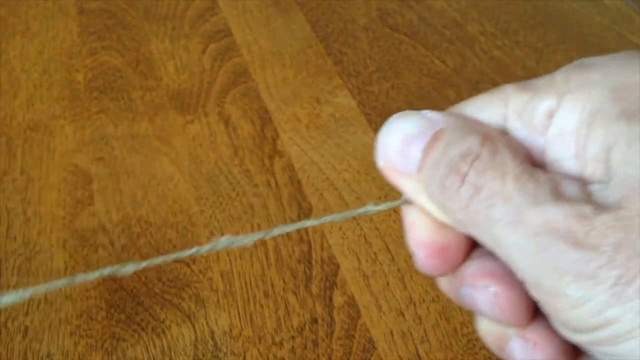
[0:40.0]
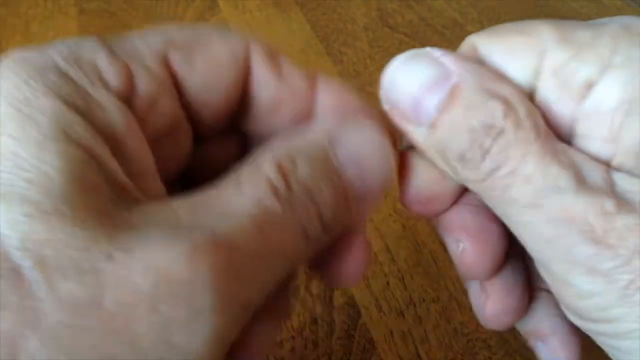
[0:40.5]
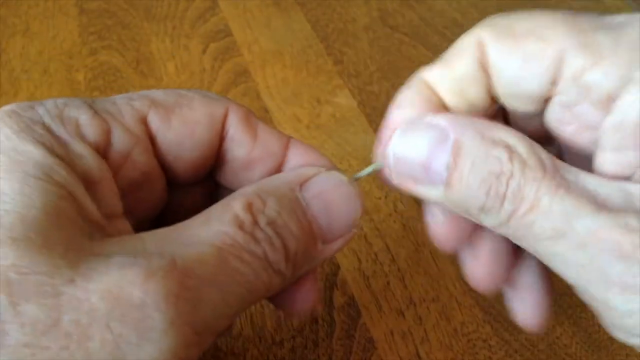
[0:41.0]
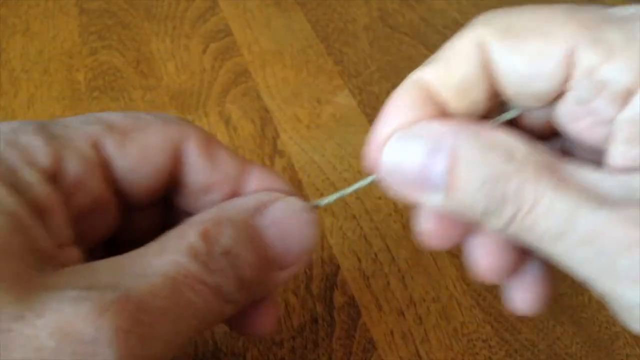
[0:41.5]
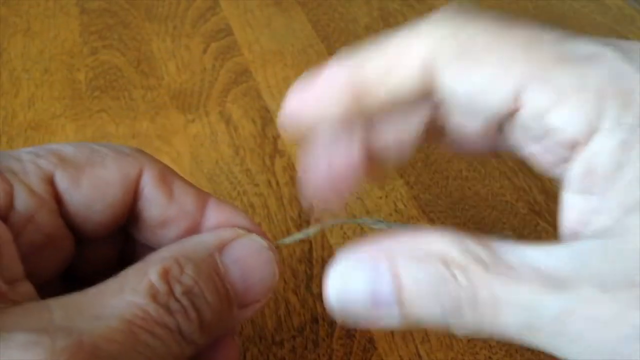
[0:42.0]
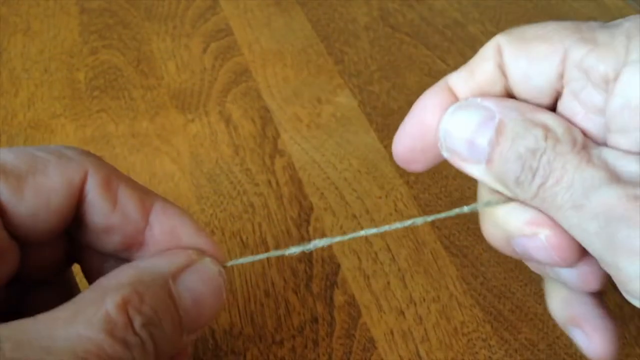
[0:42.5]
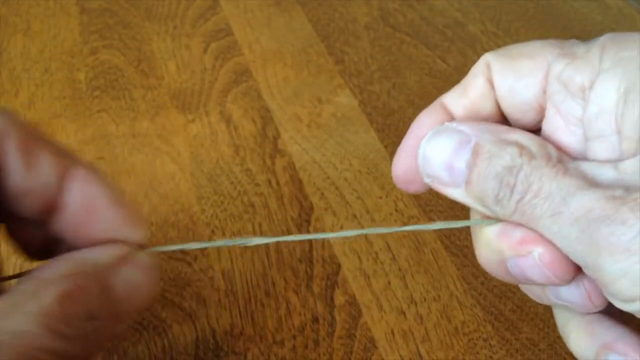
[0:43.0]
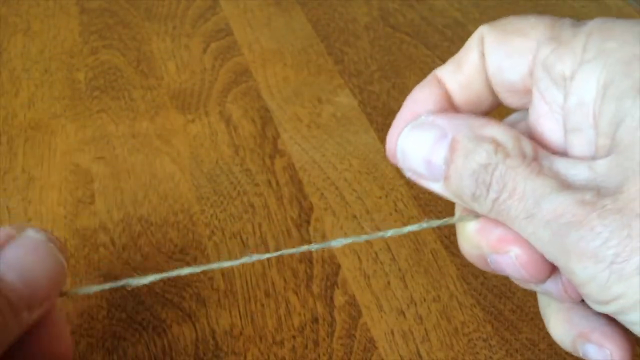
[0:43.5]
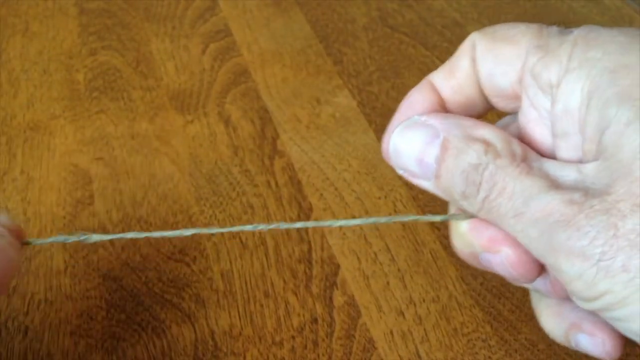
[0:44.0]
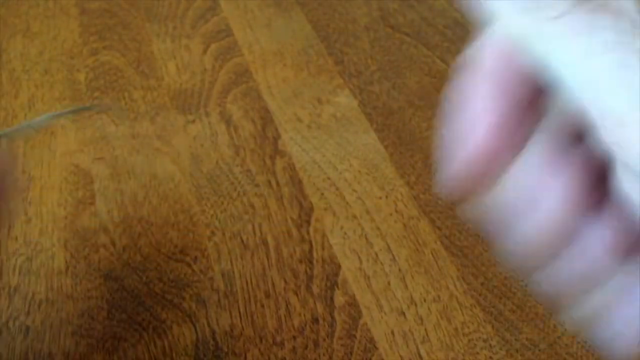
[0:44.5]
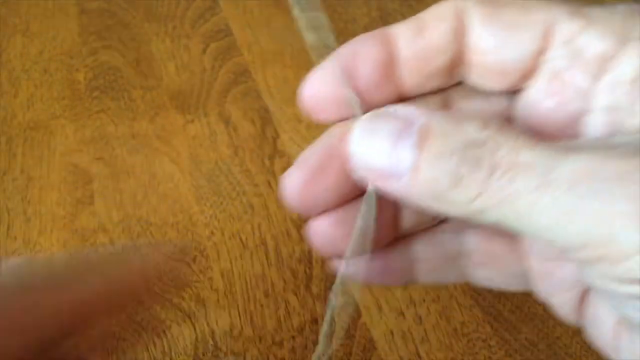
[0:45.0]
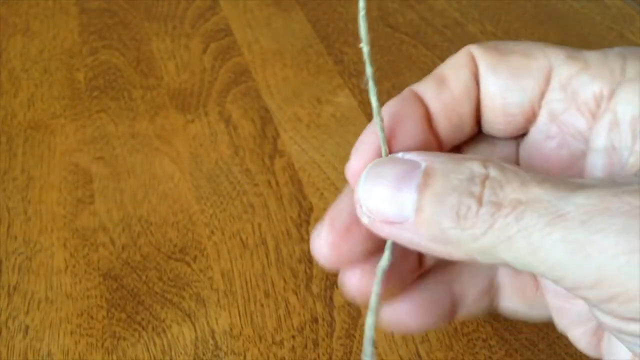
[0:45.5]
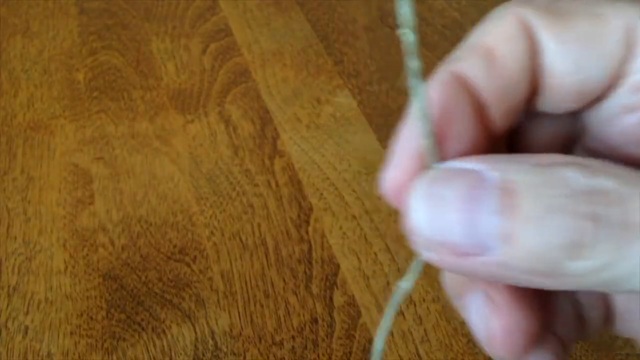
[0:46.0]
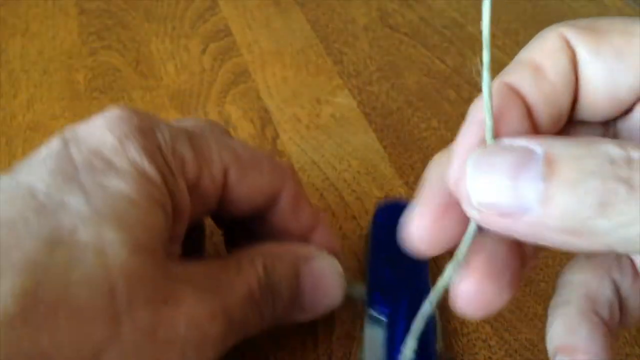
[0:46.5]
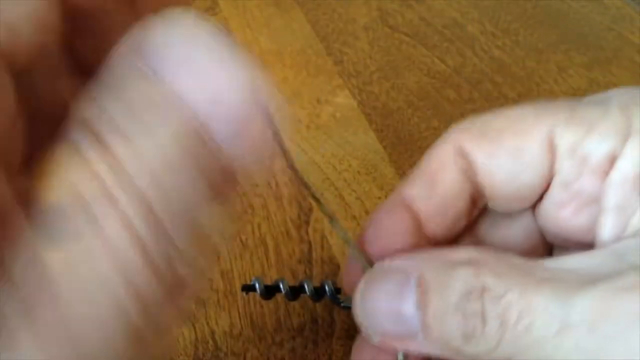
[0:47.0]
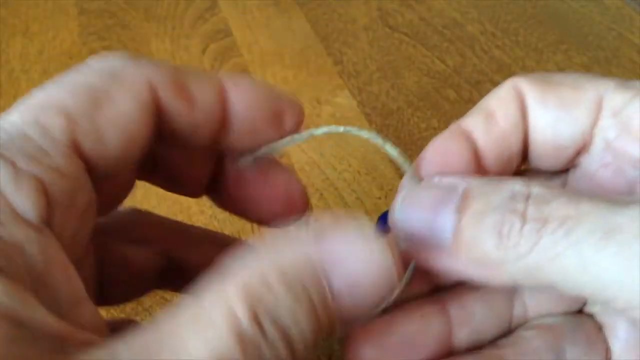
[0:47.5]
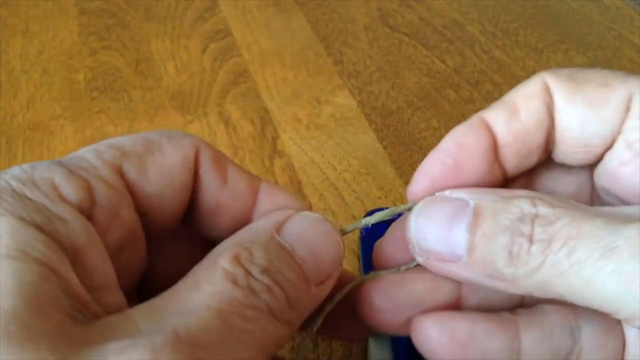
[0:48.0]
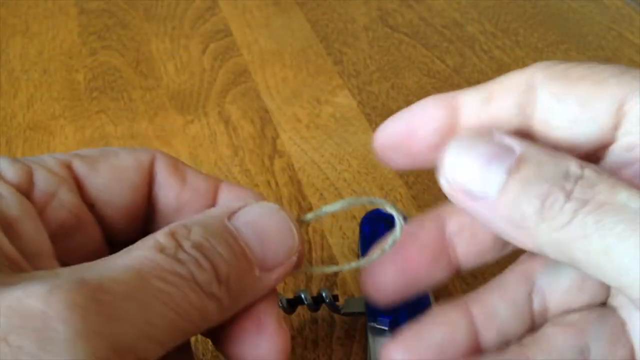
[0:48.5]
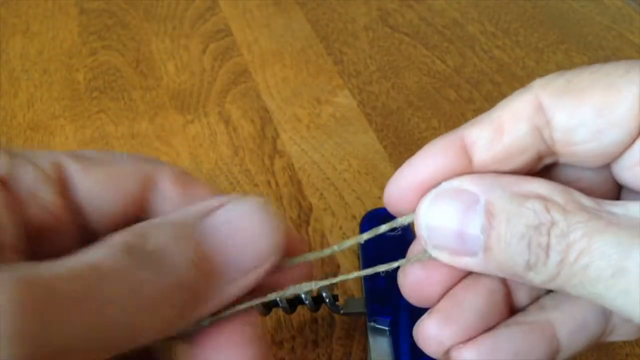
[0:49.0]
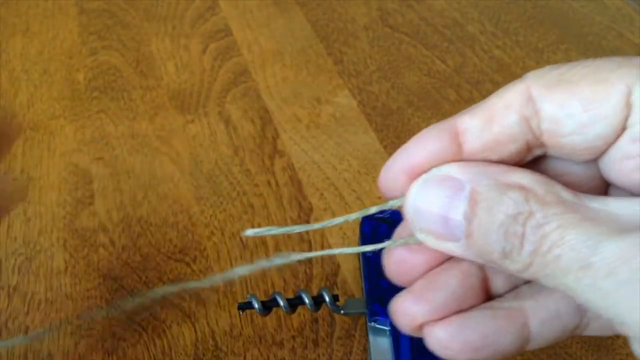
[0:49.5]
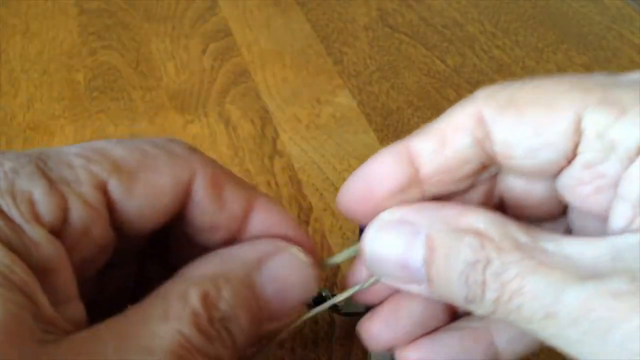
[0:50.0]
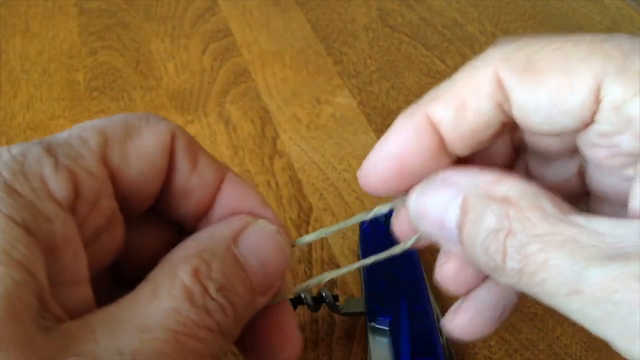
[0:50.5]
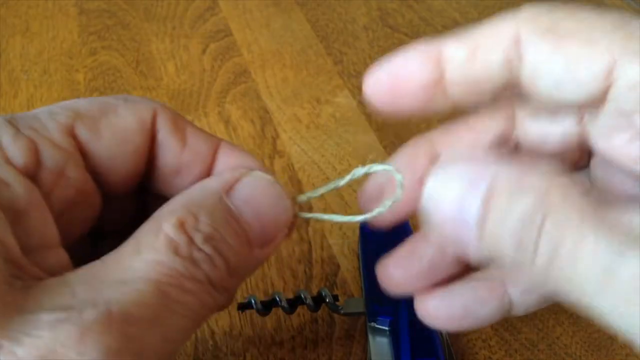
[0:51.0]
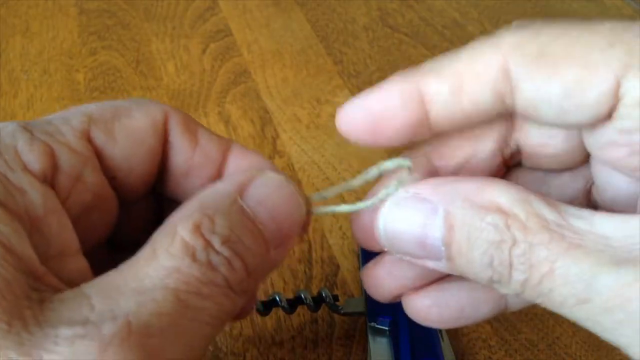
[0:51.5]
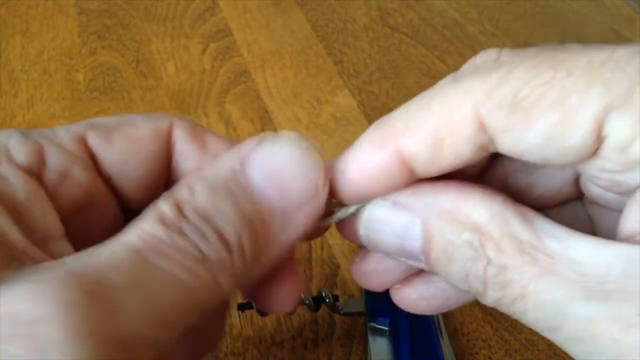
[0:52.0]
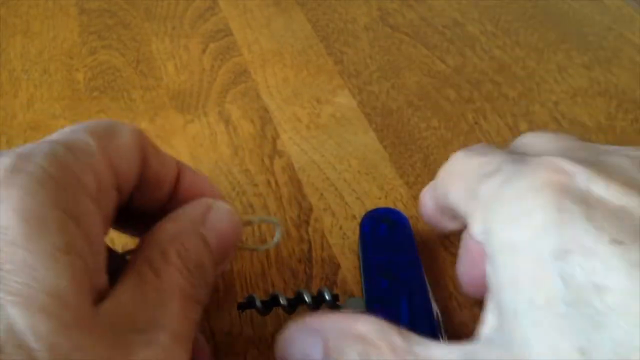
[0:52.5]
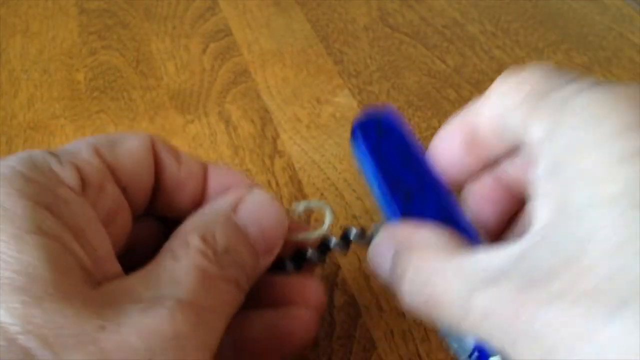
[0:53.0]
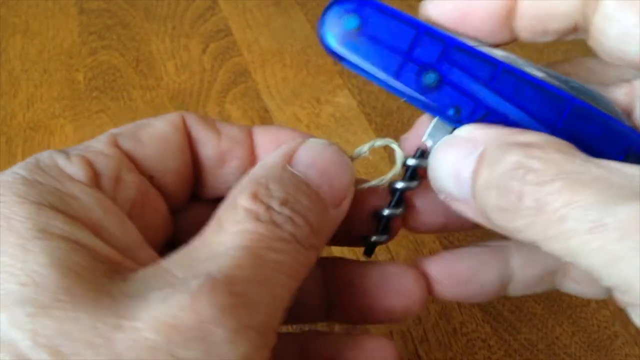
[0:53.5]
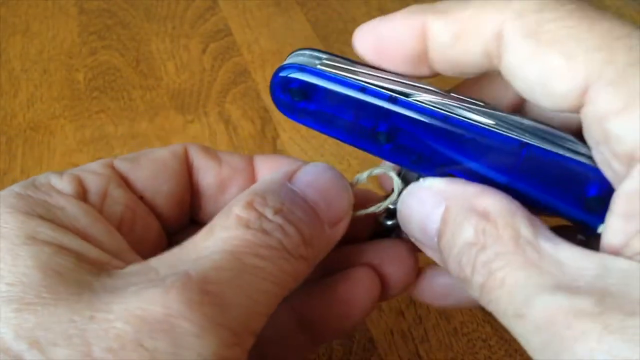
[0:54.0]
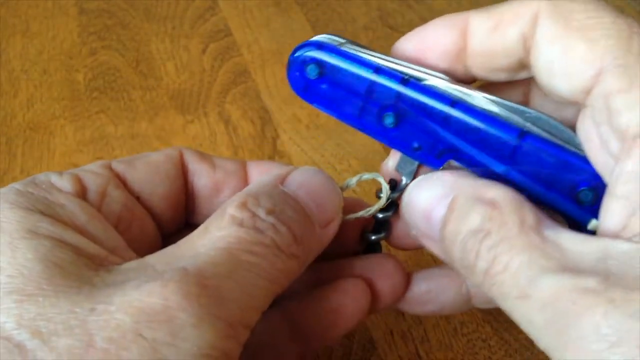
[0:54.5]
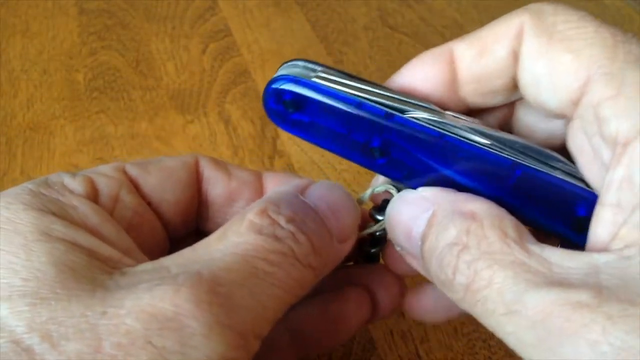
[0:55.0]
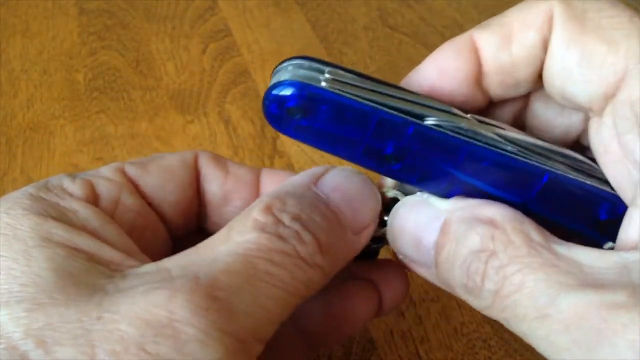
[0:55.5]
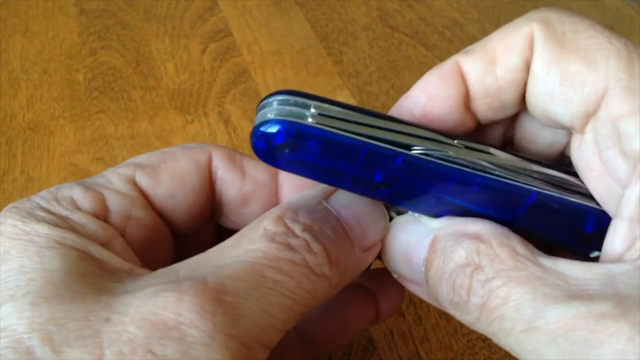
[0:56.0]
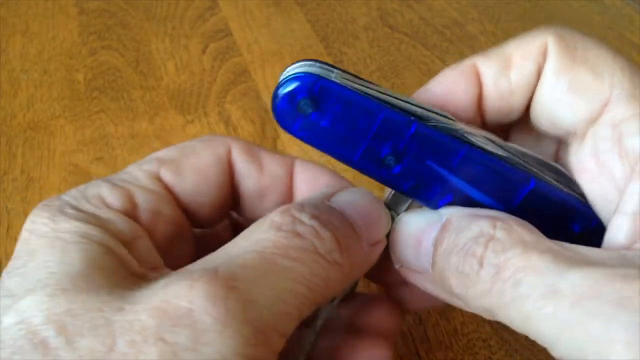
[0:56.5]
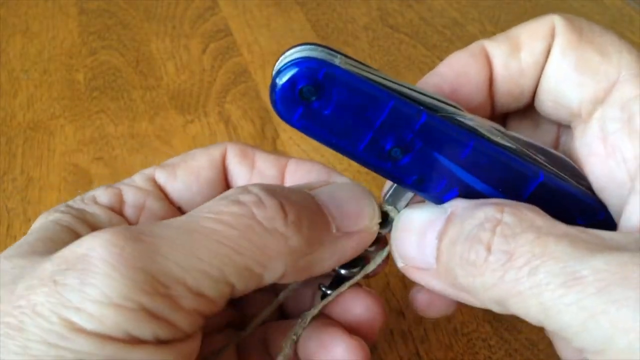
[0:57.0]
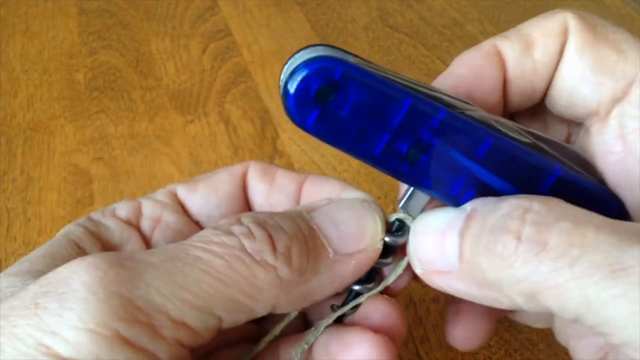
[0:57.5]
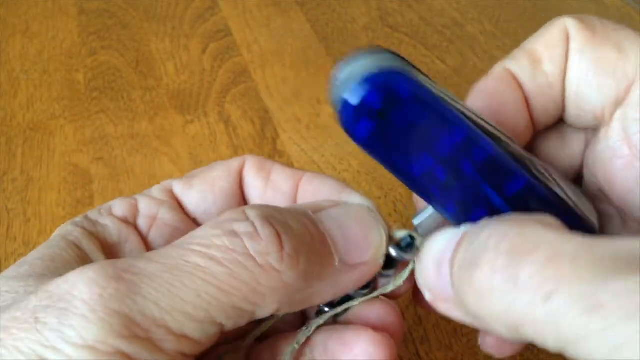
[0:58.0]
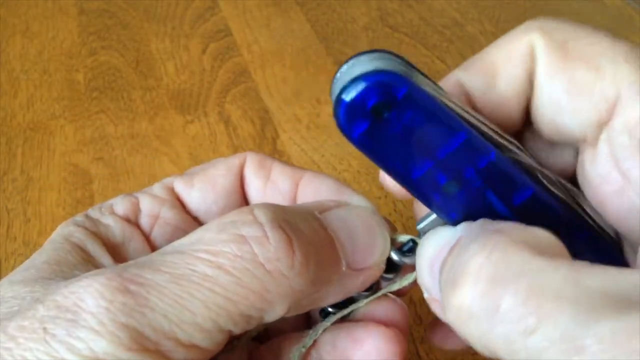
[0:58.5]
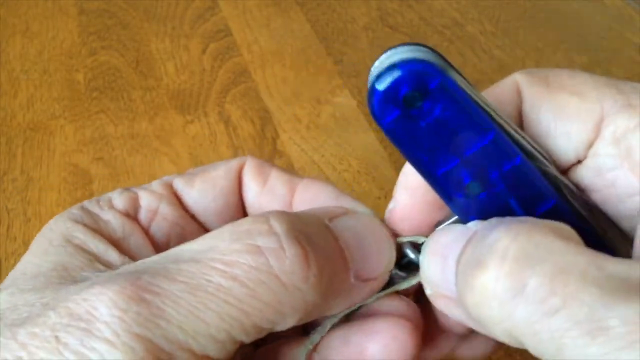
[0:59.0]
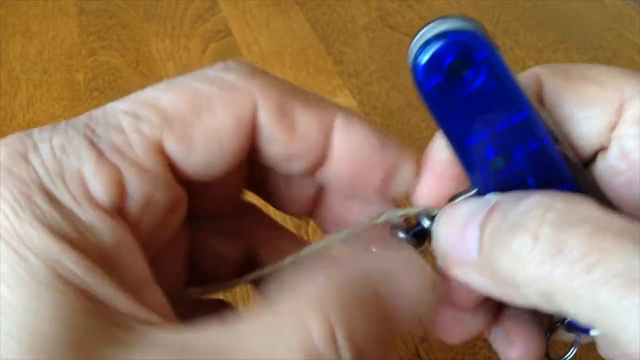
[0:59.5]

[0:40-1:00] The man prepares a piece of yarn material with glue, forms the yarn and puts it into the ferrocerium. He works the piece of material with his hands and makes a circle. The blue SAK element is the main subject all the time, and the man works on a wood surface with a wood background.